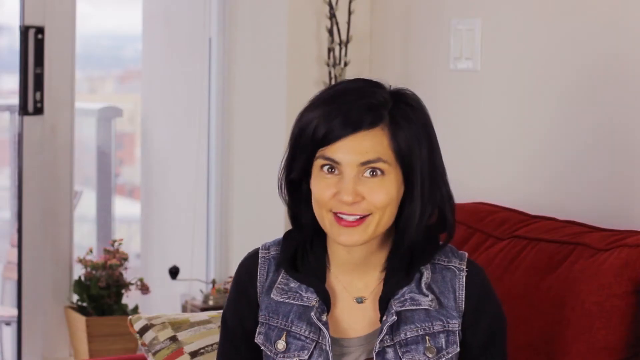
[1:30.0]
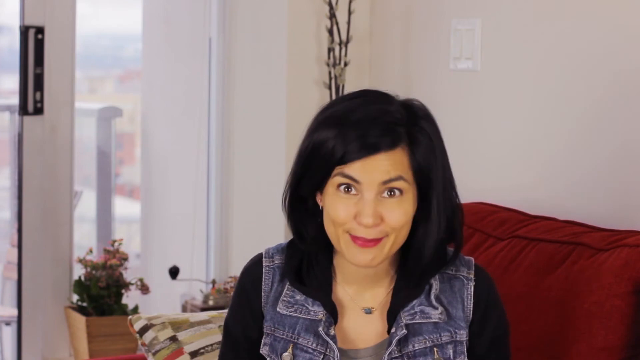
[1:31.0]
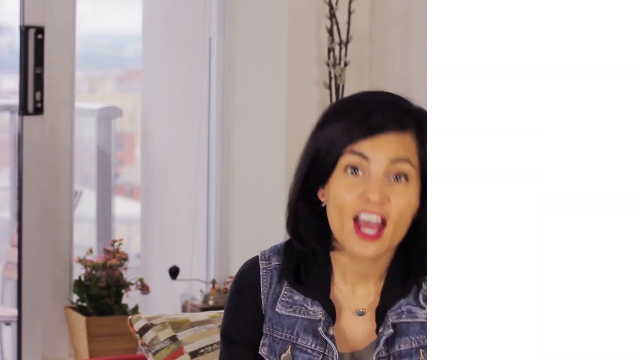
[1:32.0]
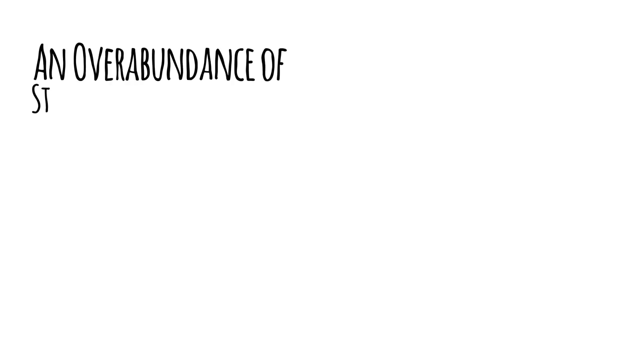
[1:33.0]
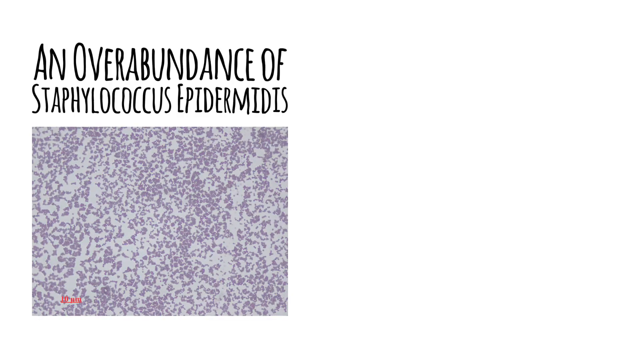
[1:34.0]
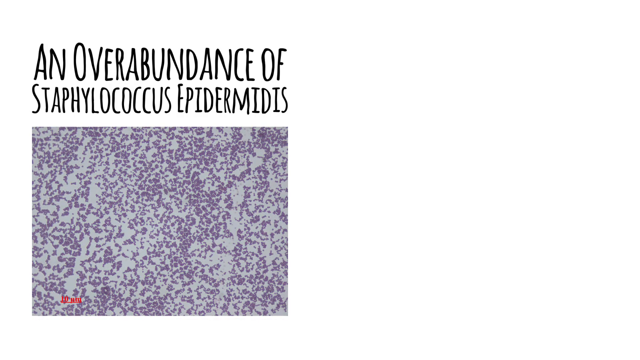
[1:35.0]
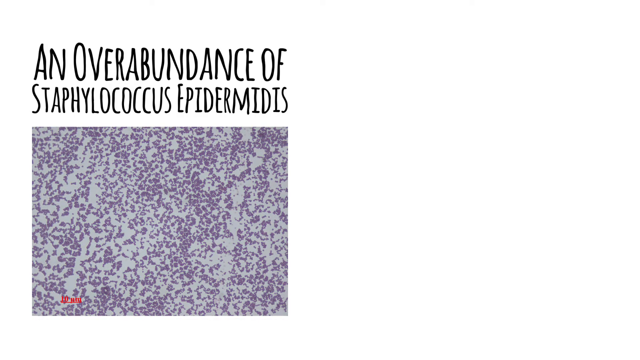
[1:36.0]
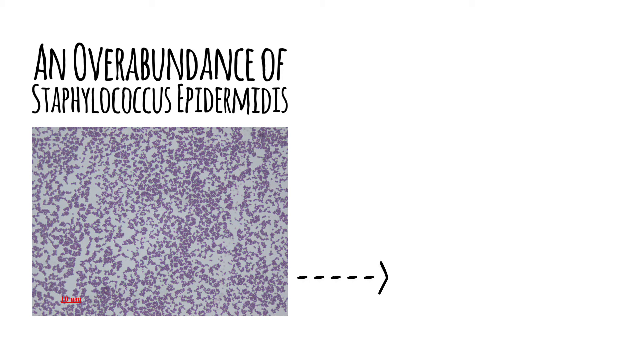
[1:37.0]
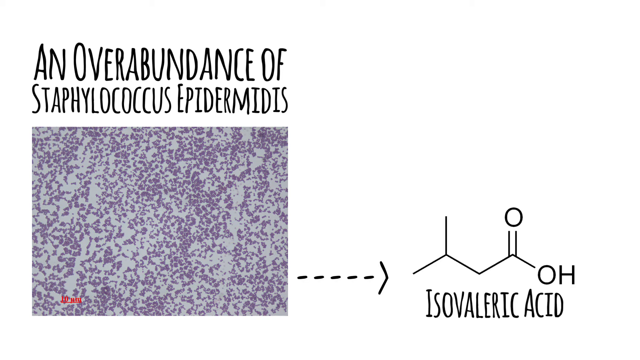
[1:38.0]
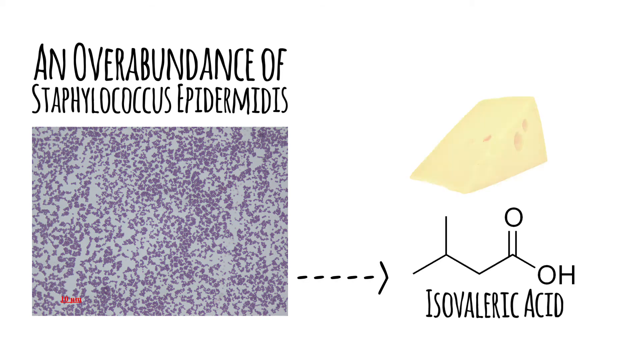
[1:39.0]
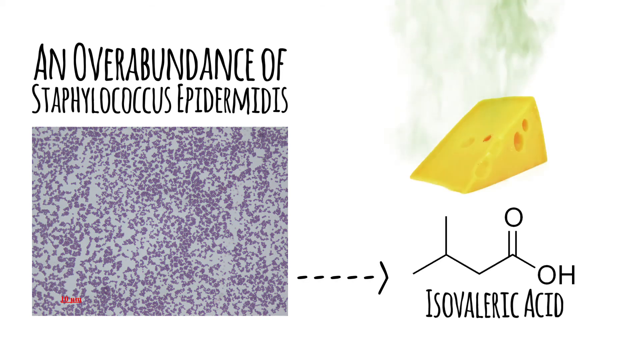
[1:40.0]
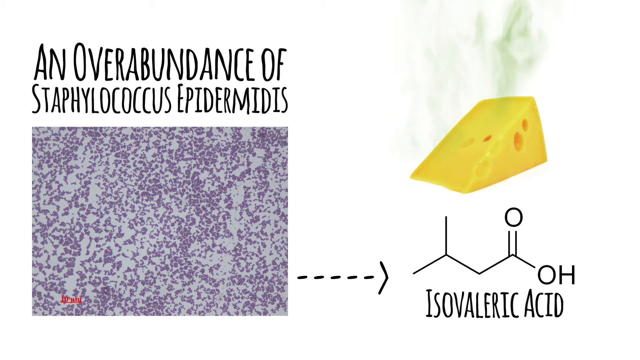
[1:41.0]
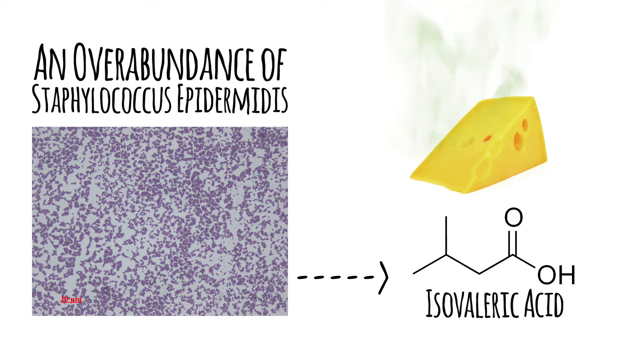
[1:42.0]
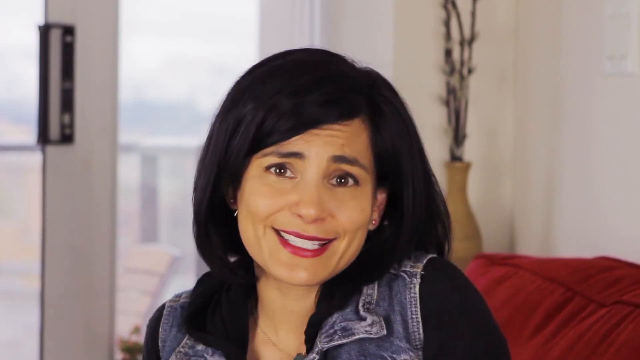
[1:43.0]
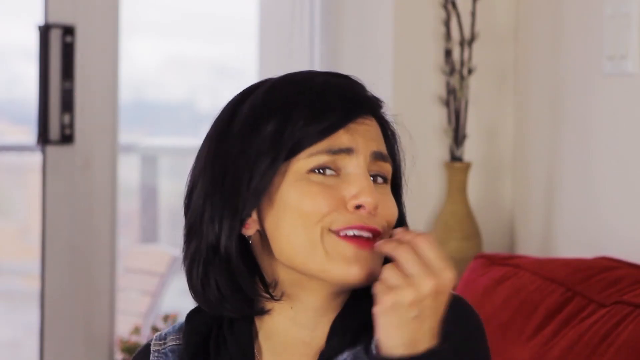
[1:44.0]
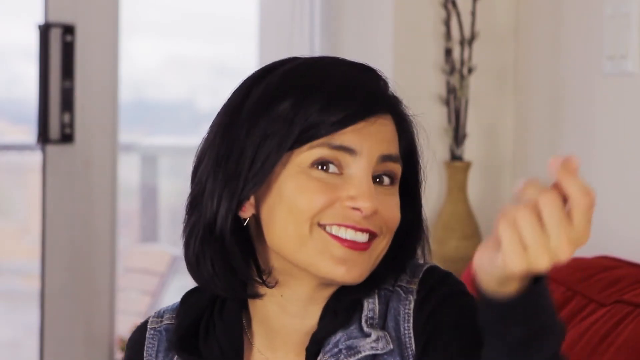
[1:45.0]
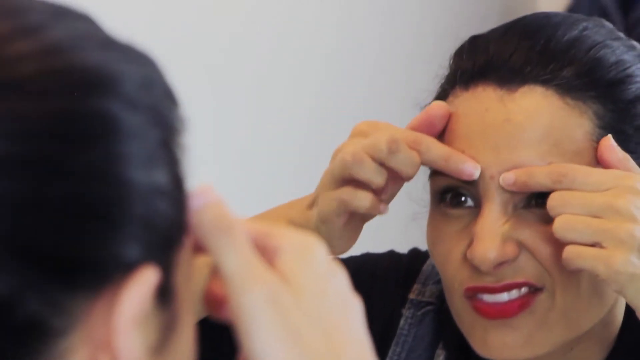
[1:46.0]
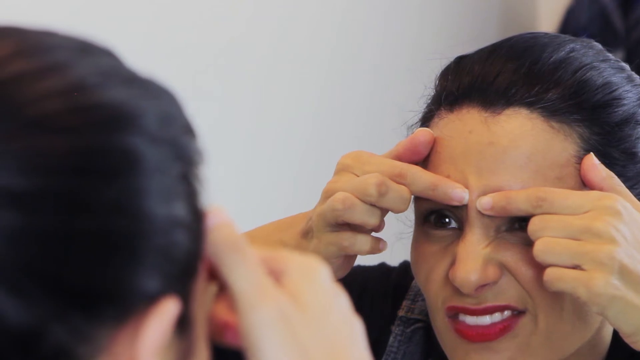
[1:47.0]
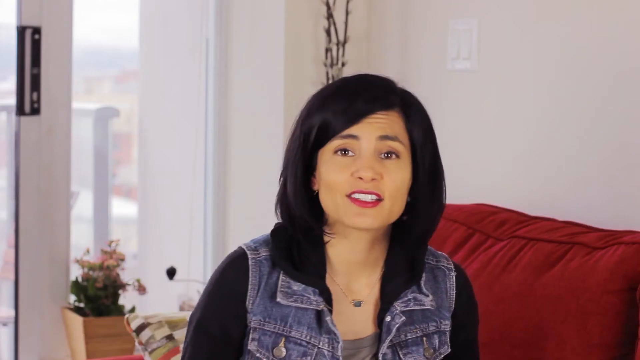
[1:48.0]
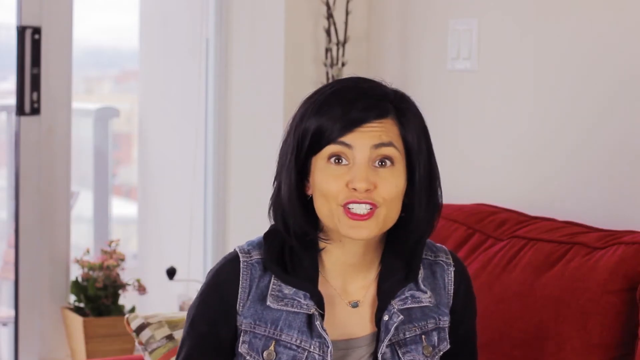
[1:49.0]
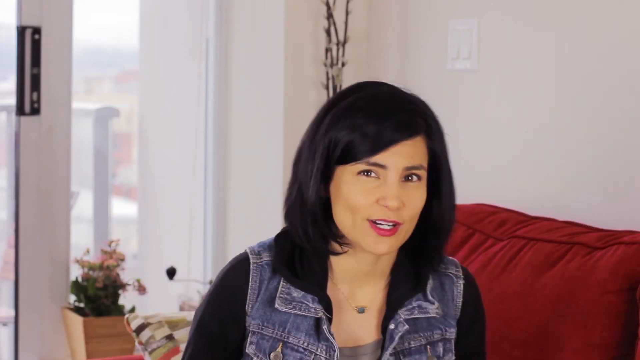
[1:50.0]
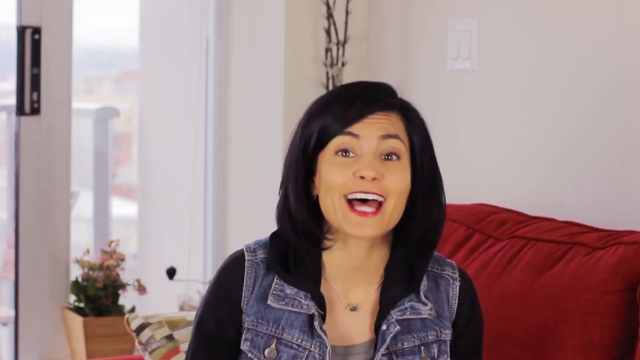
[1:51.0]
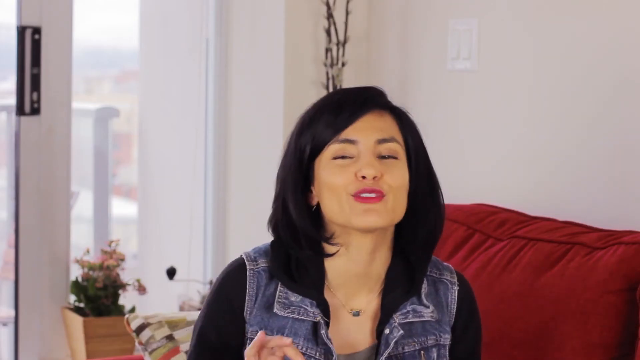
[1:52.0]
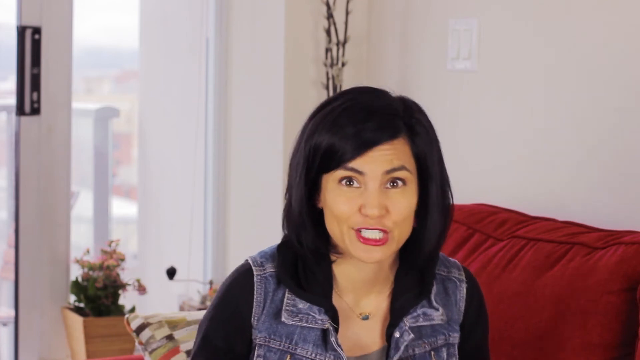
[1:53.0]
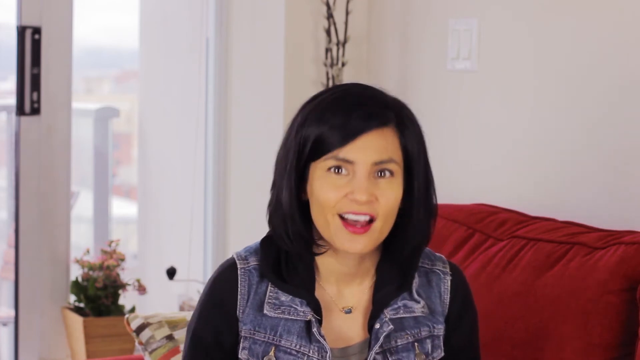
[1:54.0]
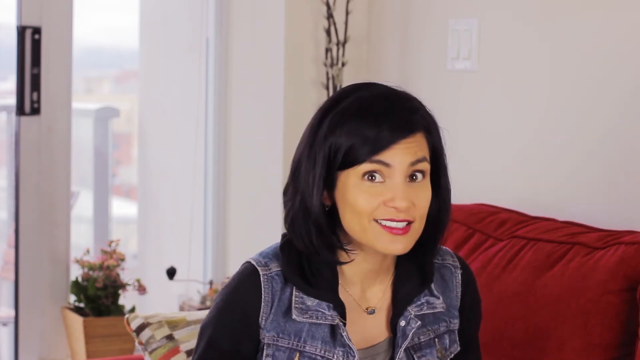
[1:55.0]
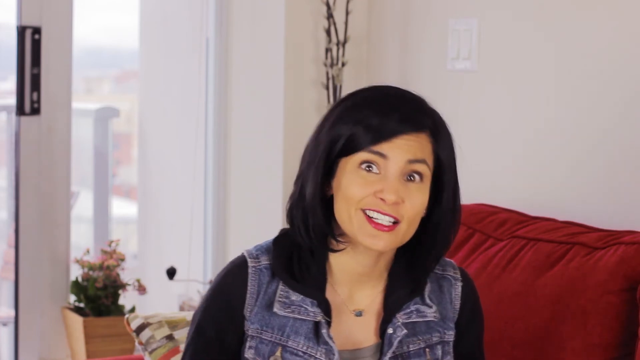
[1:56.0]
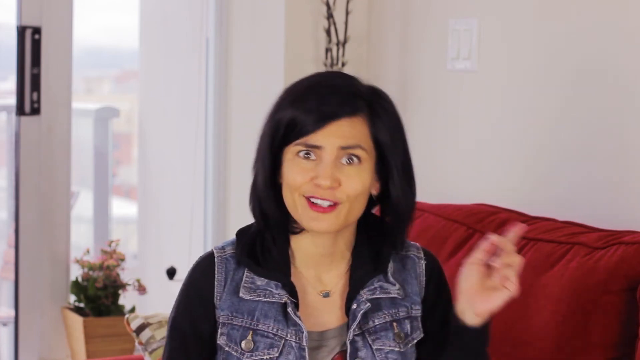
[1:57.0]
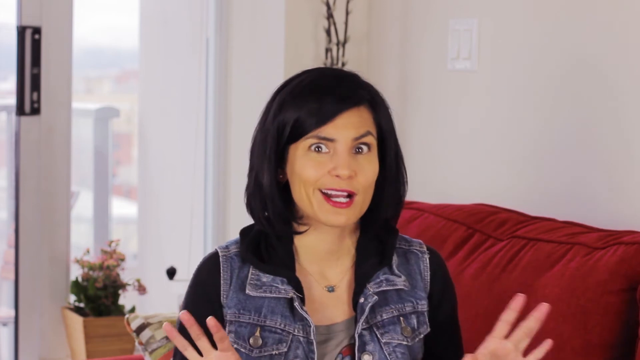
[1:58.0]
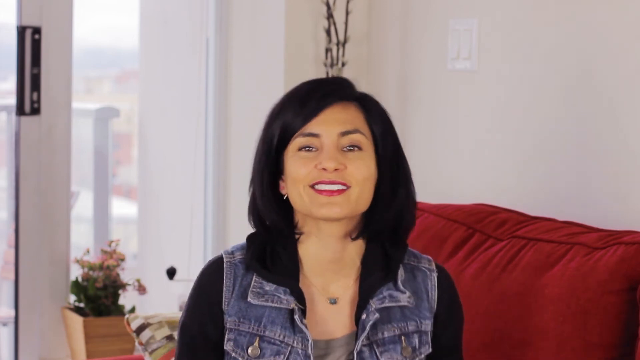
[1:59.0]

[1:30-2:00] The woman appears wearing a face mask with red symbols on it. In a close-up she continues to talk, nods her head, smiles, and shifts slightly to the left of the screen. The scene changes to a white background with text about staphylococcus epidermidis, and below it an image in a square showing in purple what looks like bacteria. A dotted line and arrow point to the right toward what looks like a chemical formula for isoflaviric acid, with a sketch above it. Next is what looks like an image of cheese with the same symbol coming out of it as seen with the woman who took off her shoes. In a close-up, the woman moves her shoulders, slightly nods her head and touches her face. She is then shown standing in front of a mirror with the camera behind her, and what looks like a pimple appears in purple. The video cuts back to her in front of the mirror with her hair pulled back, making circular movements with her body and gesturing with her hands as she speaks.